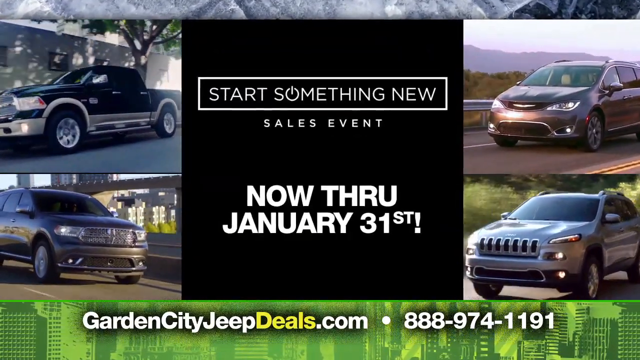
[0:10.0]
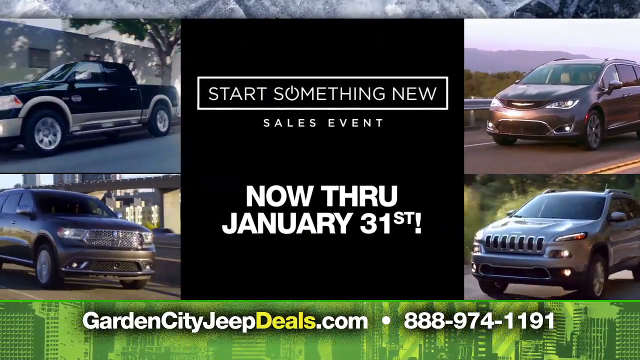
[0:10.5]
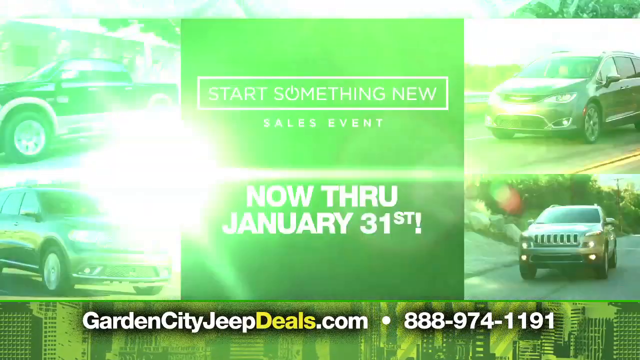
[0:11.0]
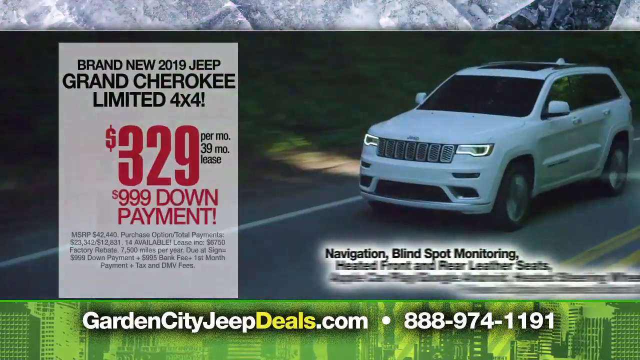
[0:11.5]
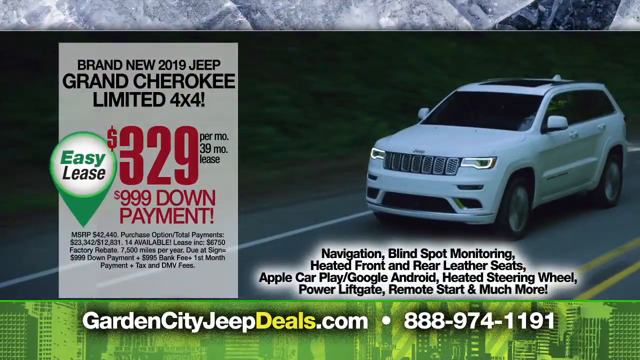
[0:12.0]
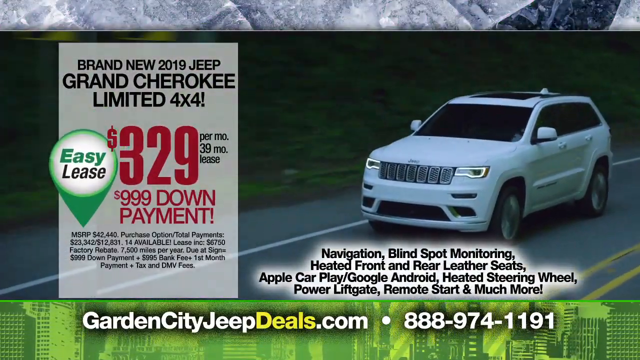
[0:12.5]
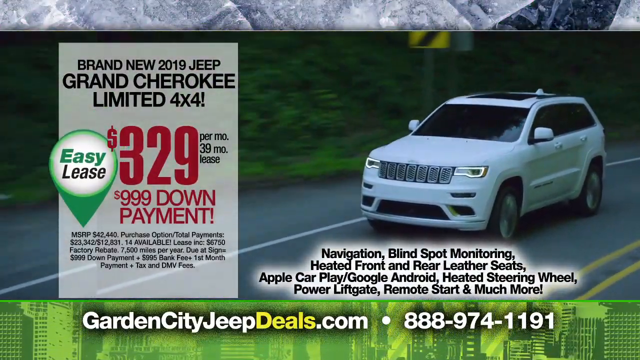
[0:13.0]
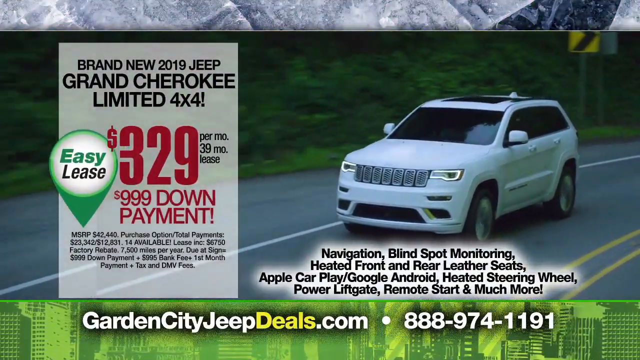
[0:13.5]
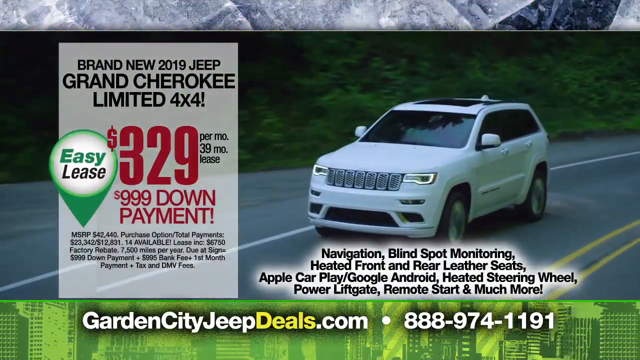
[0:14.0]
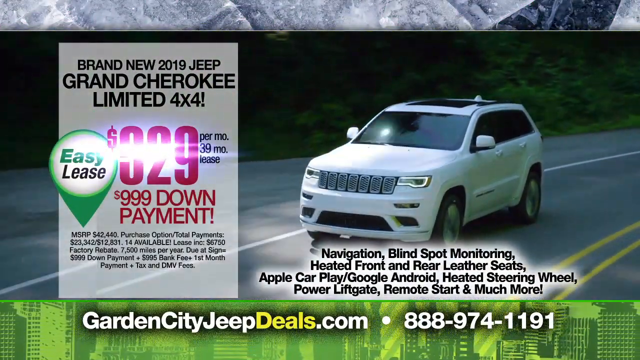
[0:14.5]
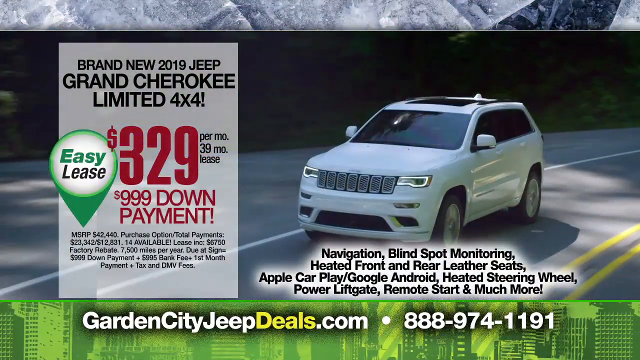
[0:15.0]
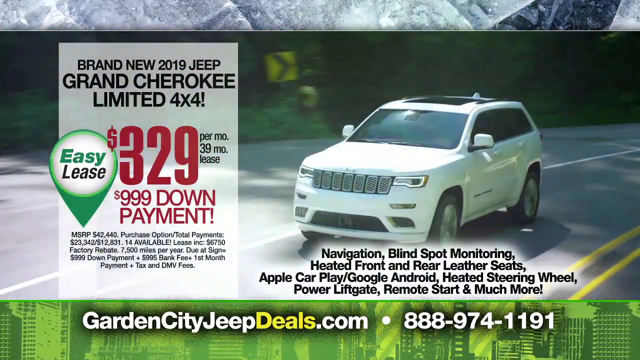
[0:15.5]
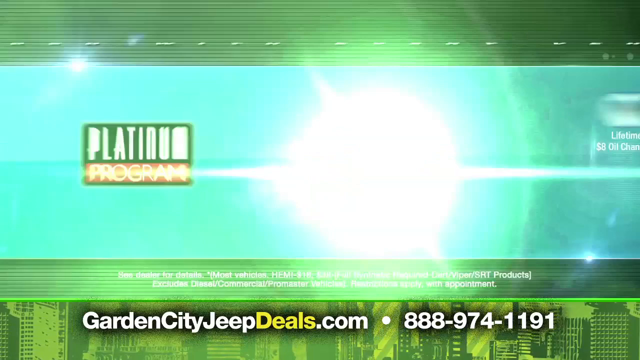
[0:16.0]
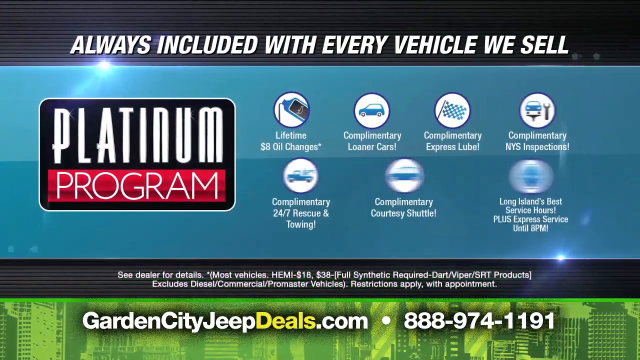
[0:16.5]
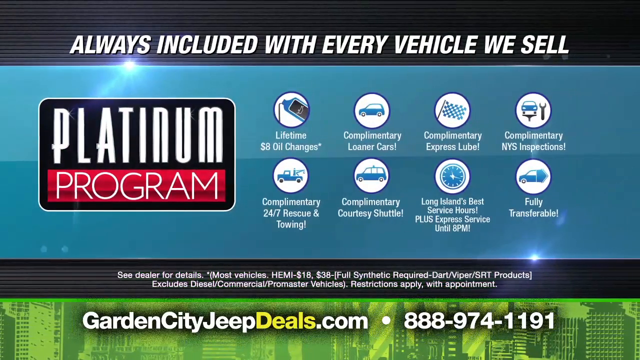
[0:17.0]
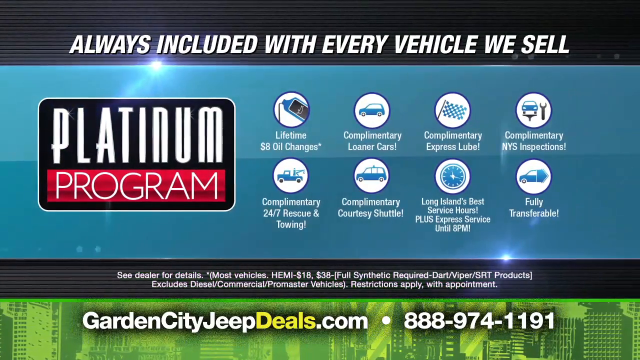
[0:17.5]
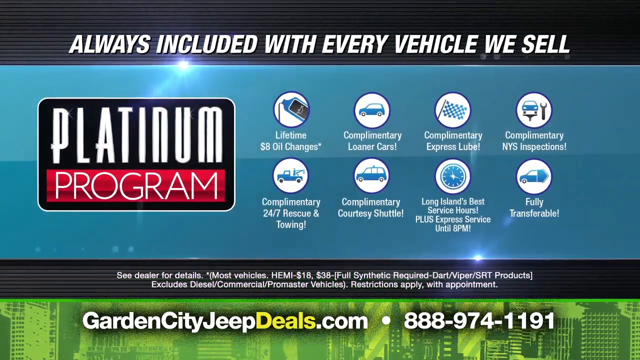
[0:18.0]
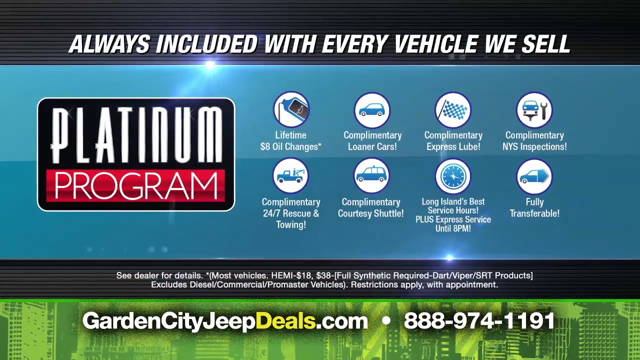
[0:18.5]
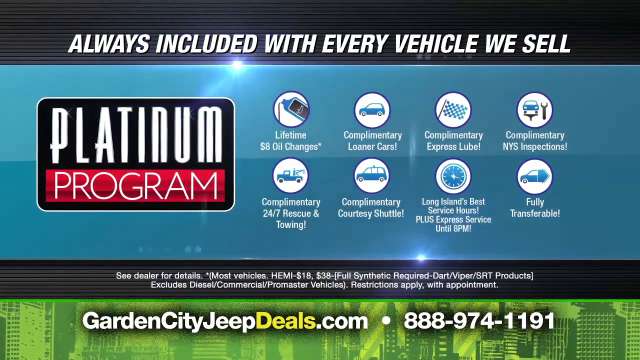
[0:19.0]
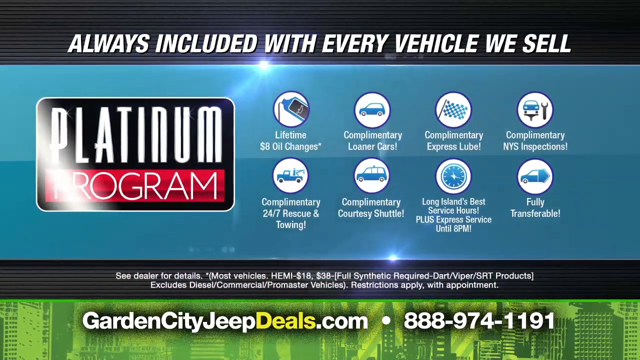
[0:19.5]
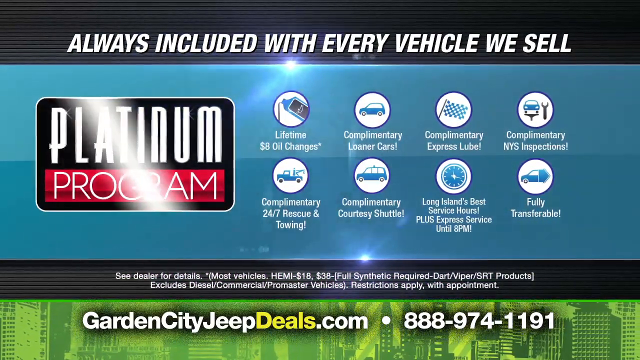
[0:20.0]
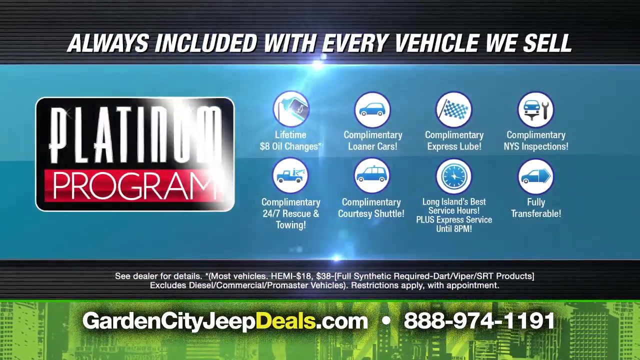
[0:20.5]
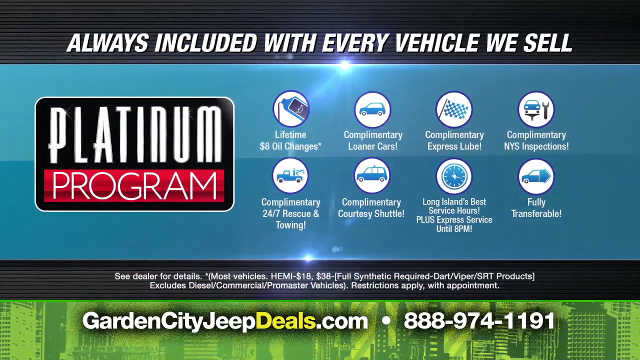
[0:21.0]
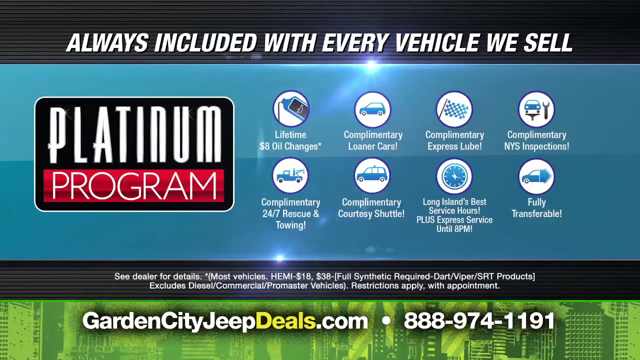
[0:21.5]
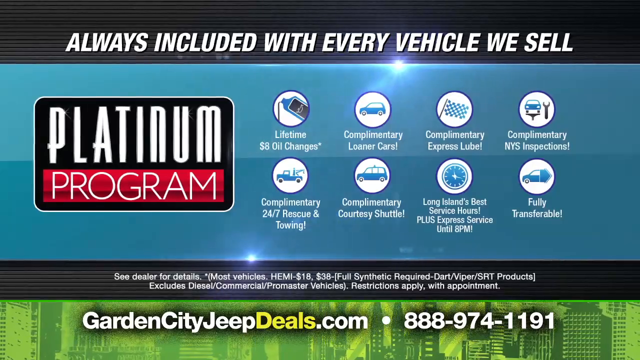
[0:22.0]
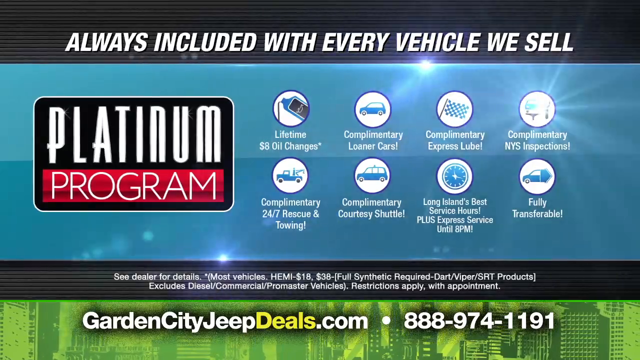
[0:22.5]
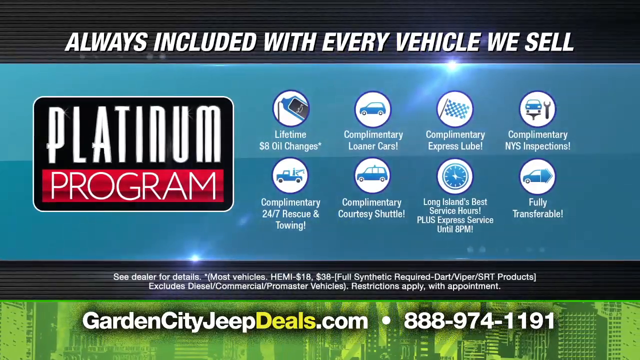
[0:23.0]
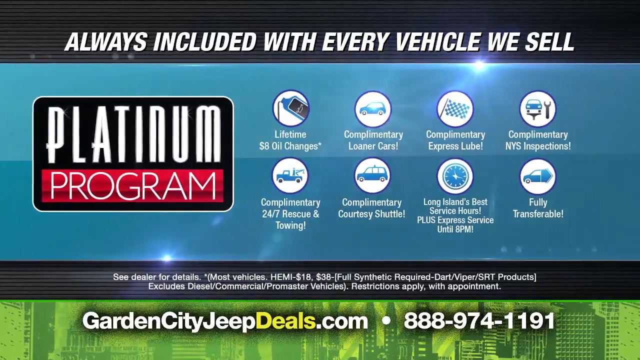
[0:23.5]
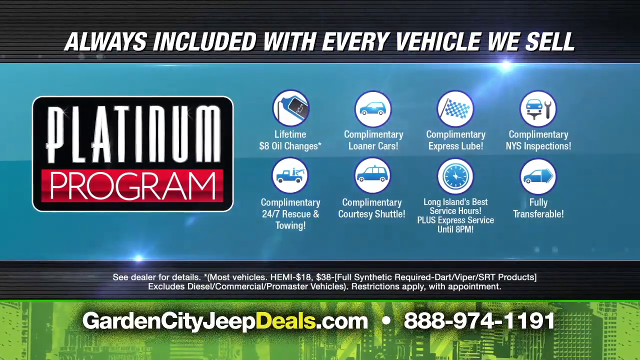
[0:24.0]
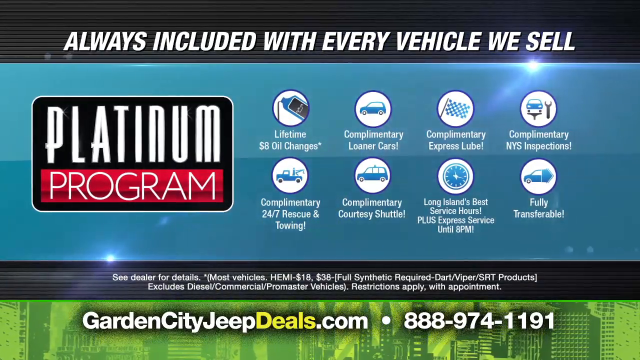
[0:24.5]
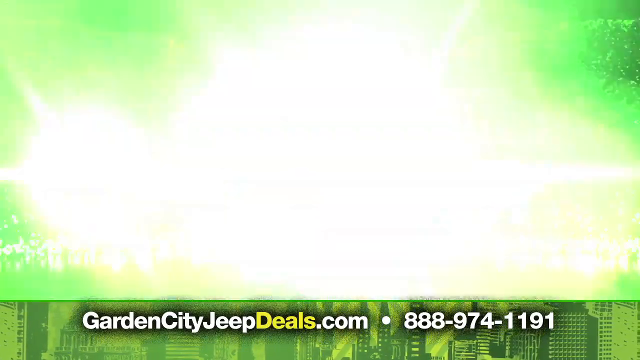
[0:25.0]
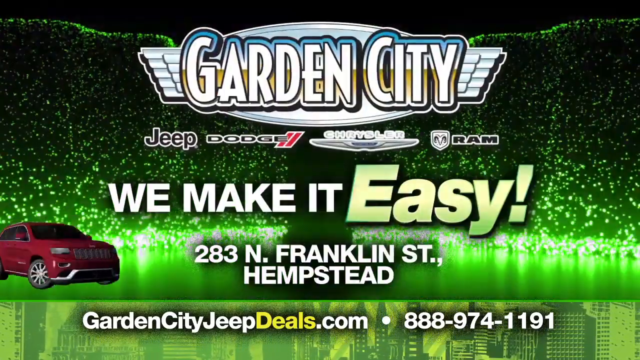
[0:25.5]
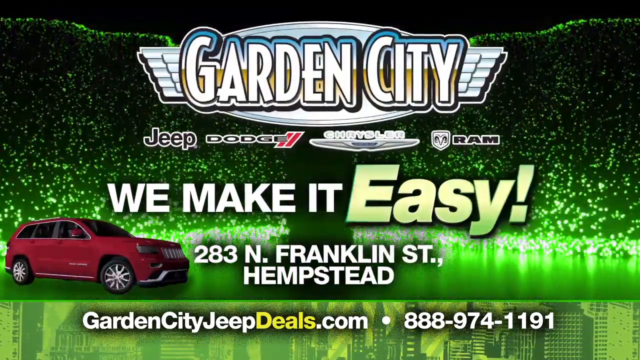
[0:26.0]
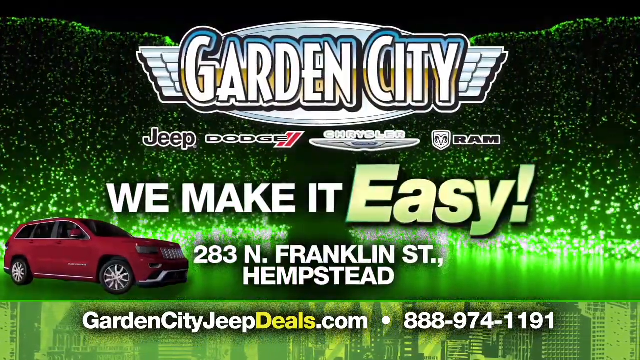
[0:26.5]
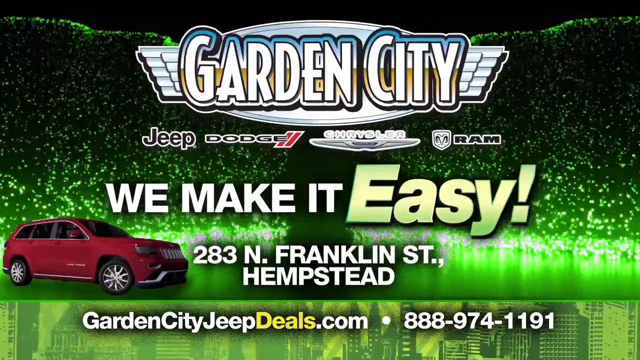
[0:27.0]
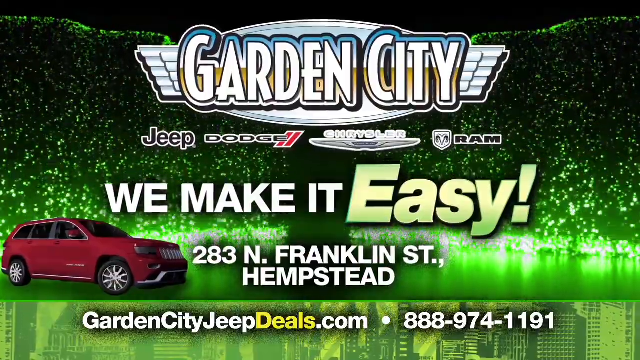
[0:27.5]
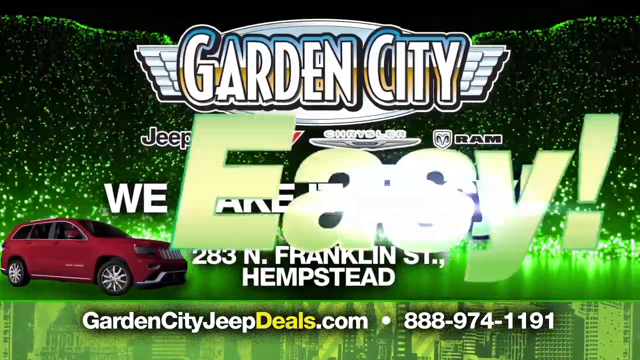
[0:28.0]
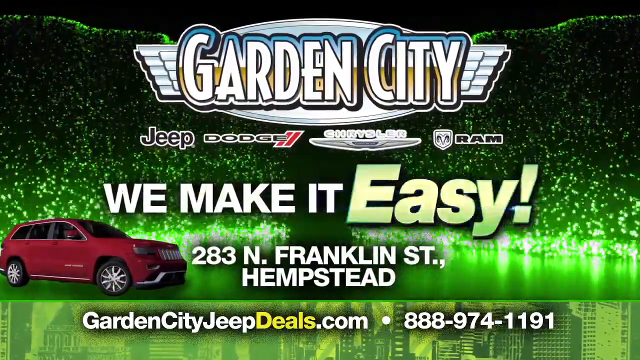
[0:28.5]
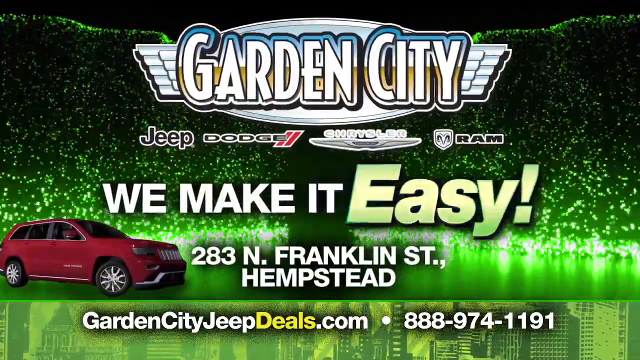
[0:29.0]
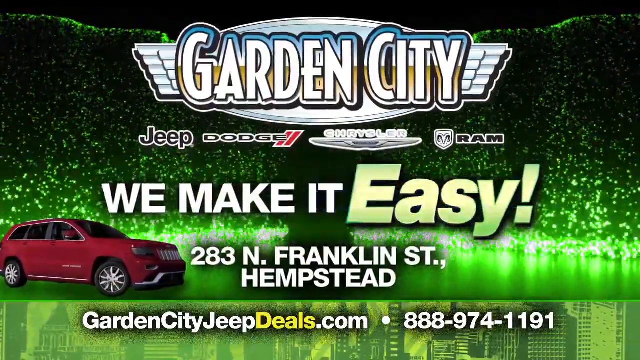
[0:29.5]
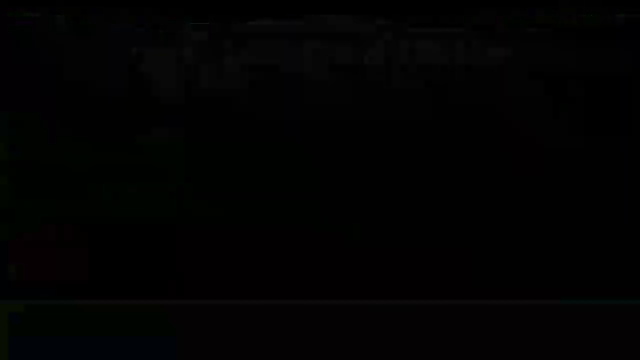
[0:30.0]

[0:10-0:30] On the left side of the screen are two images of cars or trucks driving down the road; the top one drives to the left and the bottom one drives to the right. On the top right is an image of a van driving to the left, and below it what looks like an SUV driving to the left. In the middle is a black square reading "Start Something New Sales Event," with "Now Through January 31st" below. A green banner runs left to right across the bottom of the screen, reading "GardenCityJeepDeals.com," then a white dot, and to its right "888-974-1191." The video moves to another screen with a white car, apparently an SUV, driving on the right side. On the left is a white rectangle reading "Brand New 2019 Jeep Grand Cherokee Limited 4x4," below that "Easy Lease," to its right "$329 per month, 39 month lease," and below that "$999 down payment," followed by a lot of black writing. On the right side, below the white vehicle, text lists "Navigation, Blind Spot Monitoring, Heated Front and Rear Leather Seats, Apple CarPlay / Google Android, Heated Steering Wheel," followed by further items including "Remote Start, and much more." Next comes a blue screen reading "Always Included with Every Vehicle We Sell" at the top, with a small credit-card-like image labeled "Platinum Program" below it and, to its right, a number of emblems showing services such as oil change. The video then returns to the first screen with the vehicles, this time with a red SUV on the left.